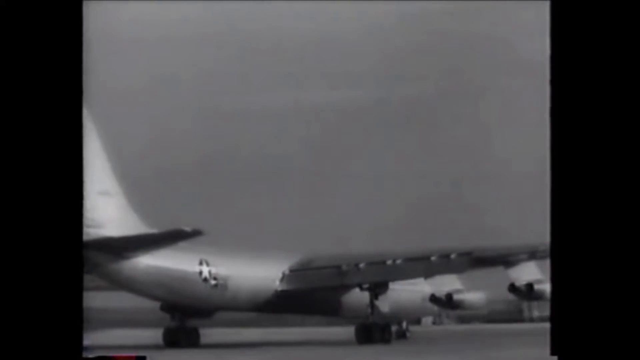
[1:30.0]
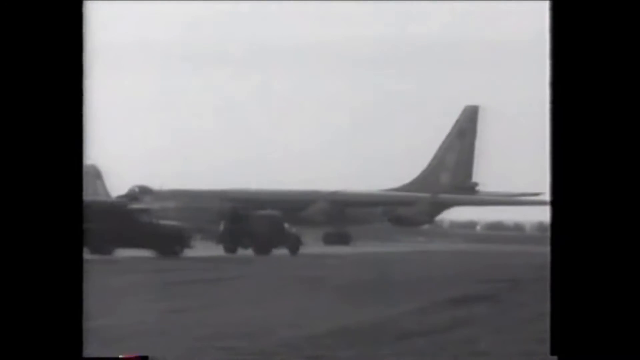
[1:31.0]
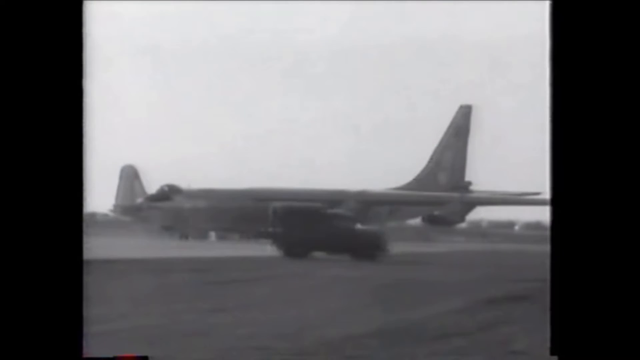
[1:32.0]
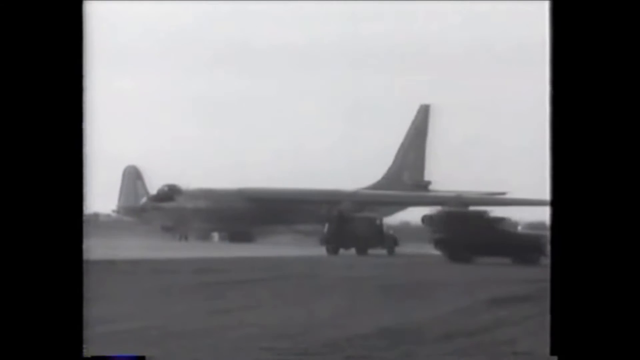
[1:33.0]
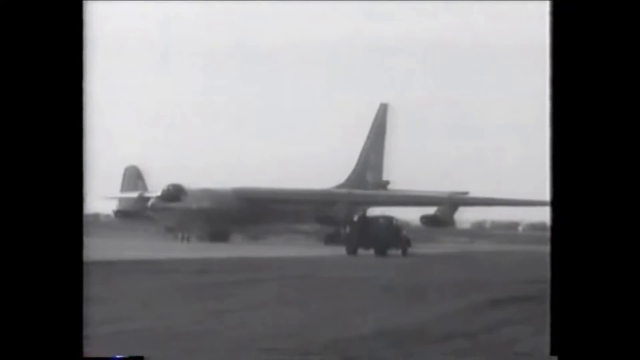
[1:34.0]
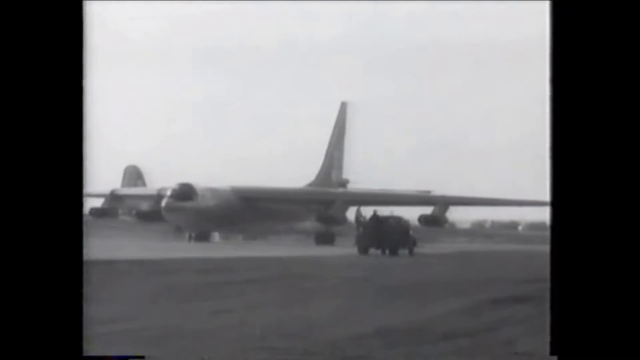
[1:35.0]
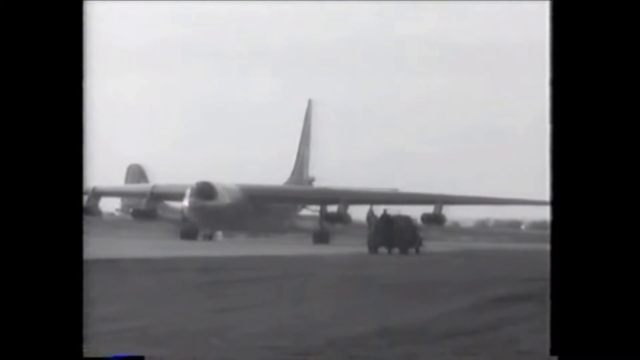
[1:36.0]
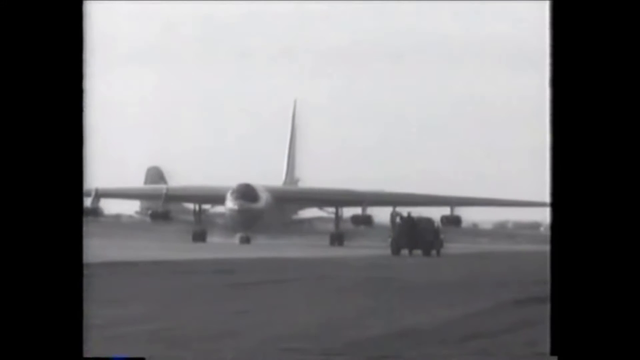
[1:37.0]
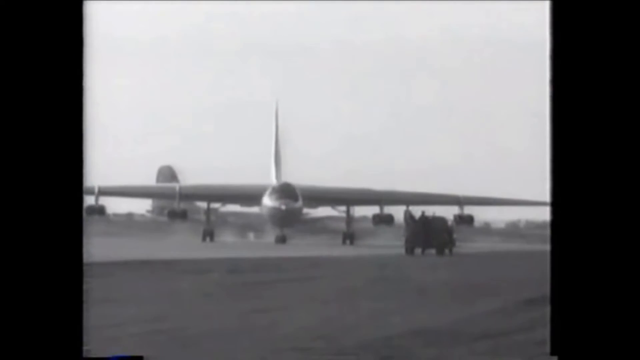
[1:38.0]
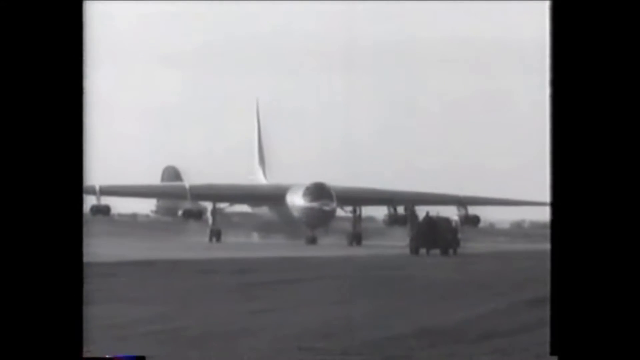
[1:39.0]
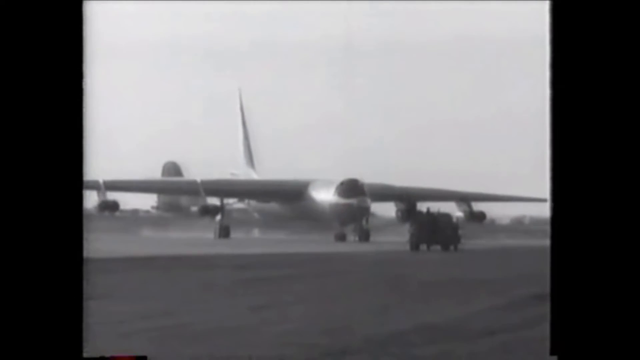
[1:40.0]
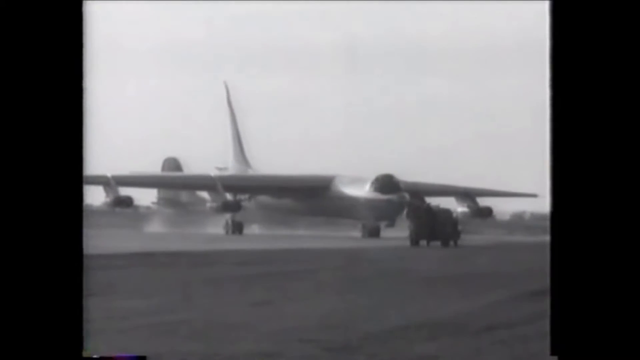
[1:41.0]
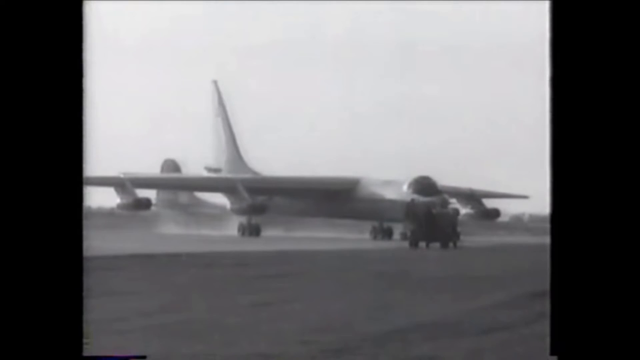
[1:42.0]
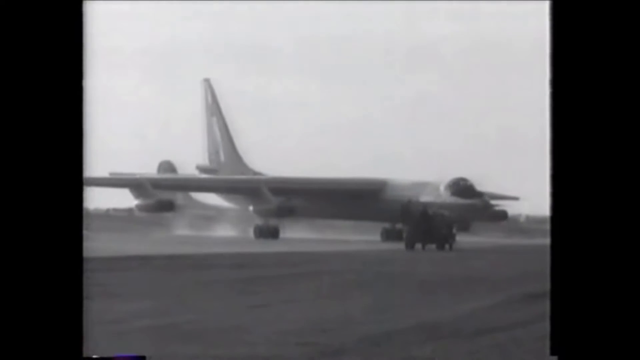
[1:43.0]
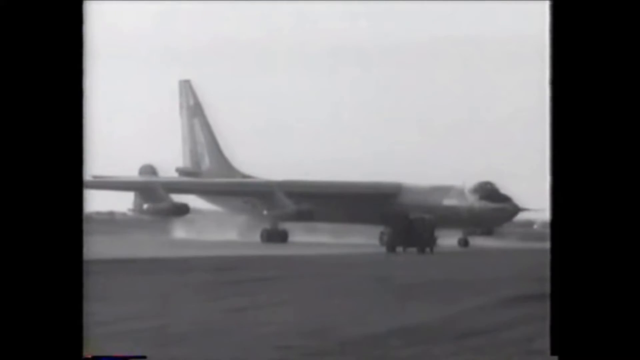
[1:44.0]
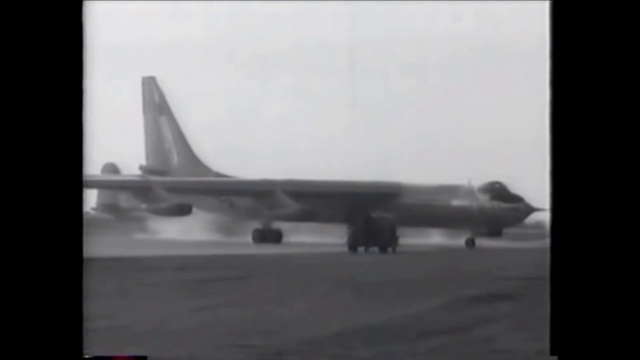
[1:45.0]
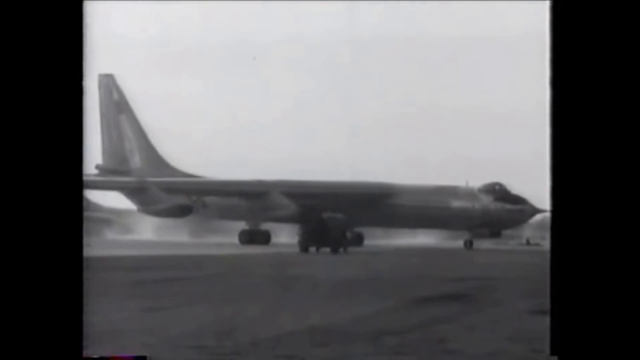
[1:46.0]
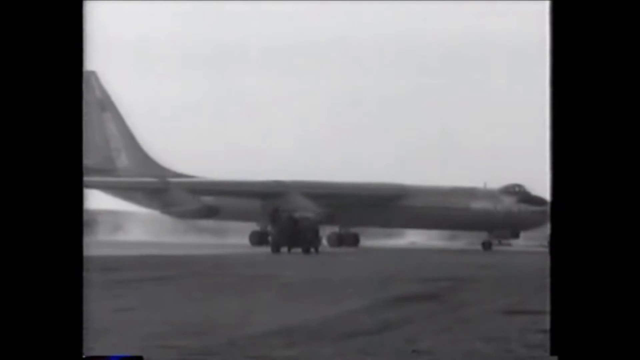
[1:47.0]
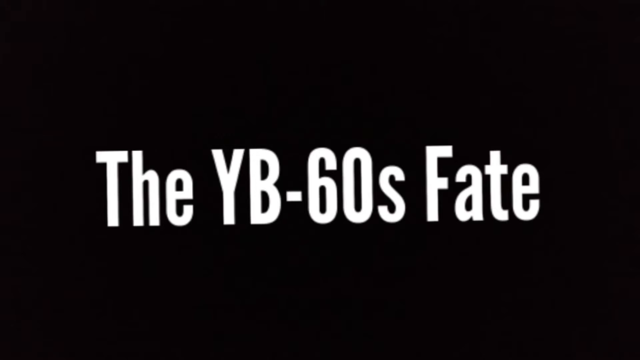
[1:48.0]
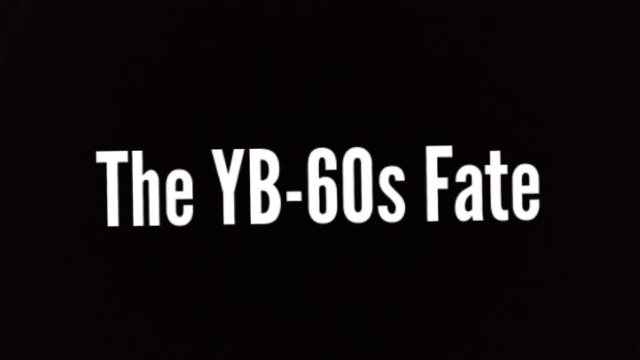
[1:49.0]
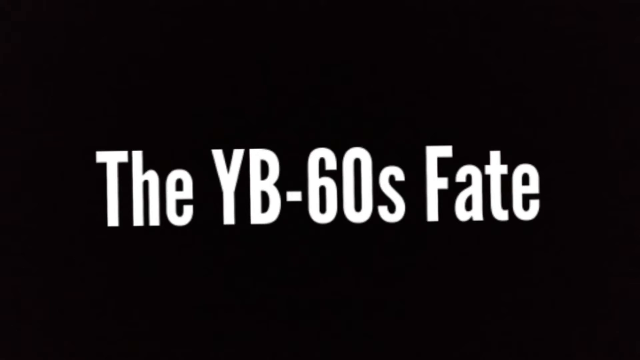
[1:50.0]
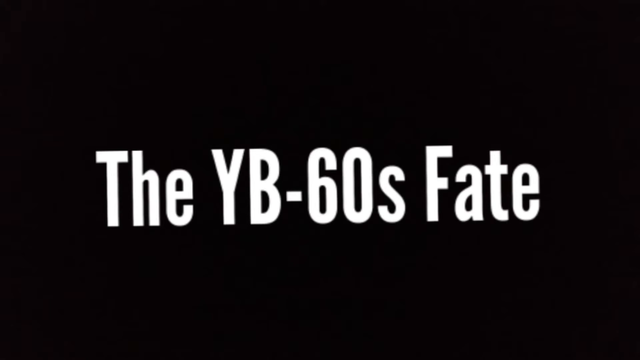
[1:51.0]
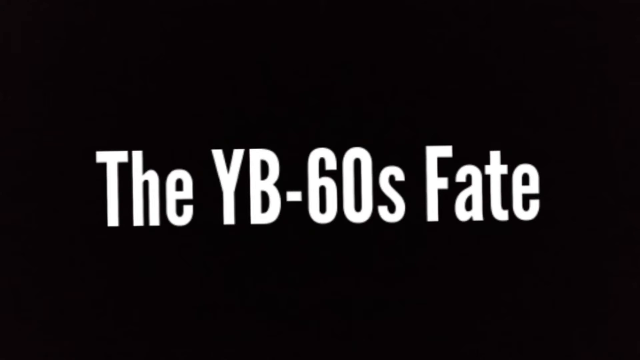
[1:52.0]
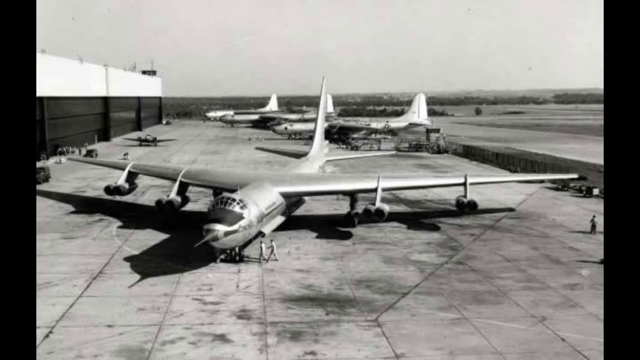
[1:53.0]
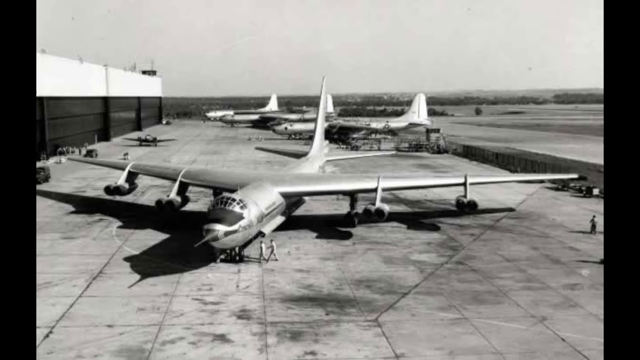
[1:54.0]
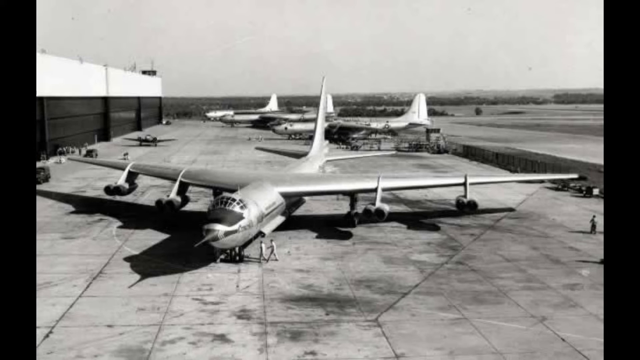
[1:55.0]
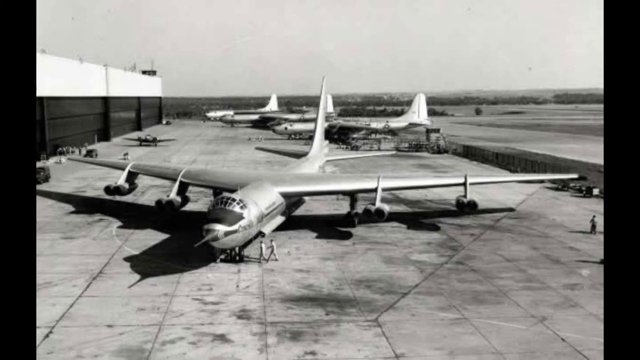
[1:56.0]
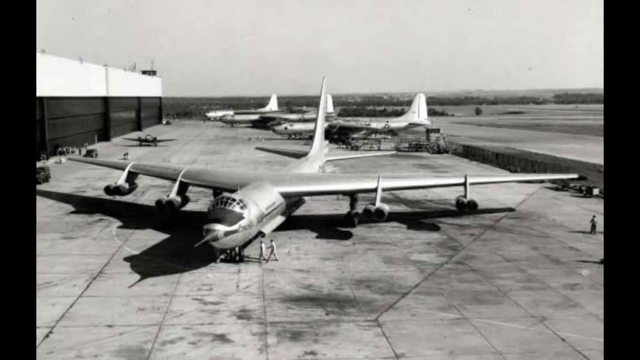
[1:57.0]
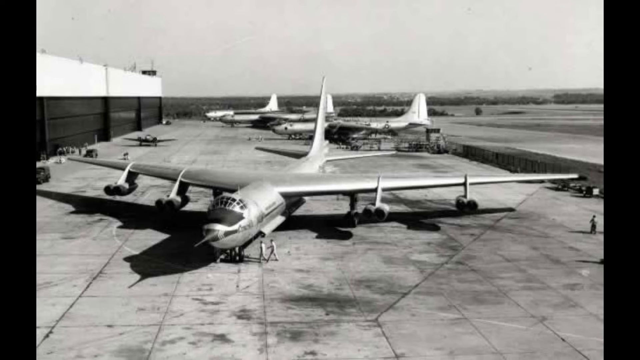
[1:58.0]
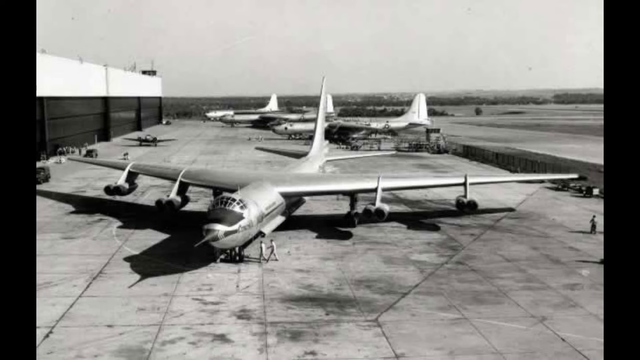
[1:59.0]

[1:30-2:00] More footage shows the B-36 taxiing on the runway, surrounded by what appear to be military vehicles from the 1950s that look somewhat like Jeeps. A few individuals are on the runway near the aircraft, and some who look like men are standing on the back of these Jeeps, apparently very close to the aircraft. The B-36 makes almost a 360-degree turn, or maybe a 180. A title screen follows. Then a black-and-white still image shows the B-36 in an enclosed area near other parked aircraft, with a few men in the same area talking to each other or walking around, and a building.